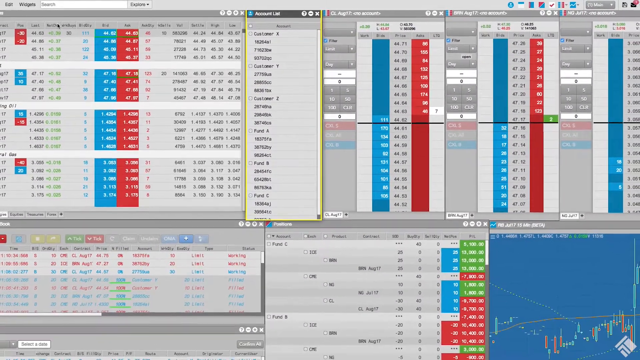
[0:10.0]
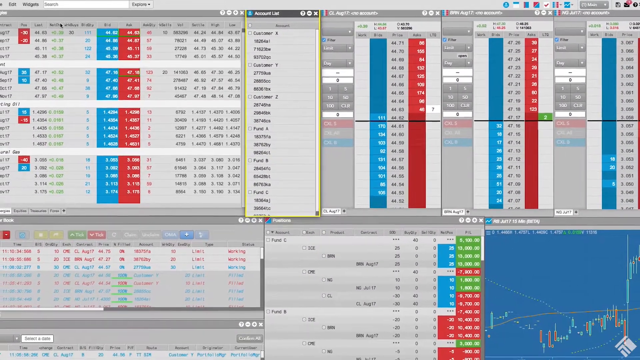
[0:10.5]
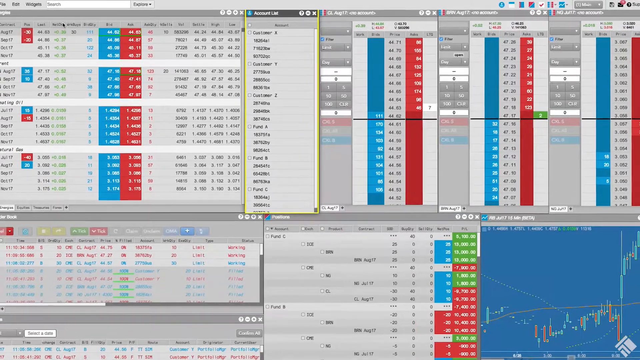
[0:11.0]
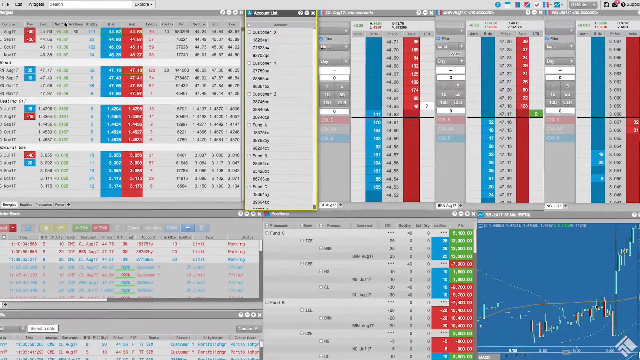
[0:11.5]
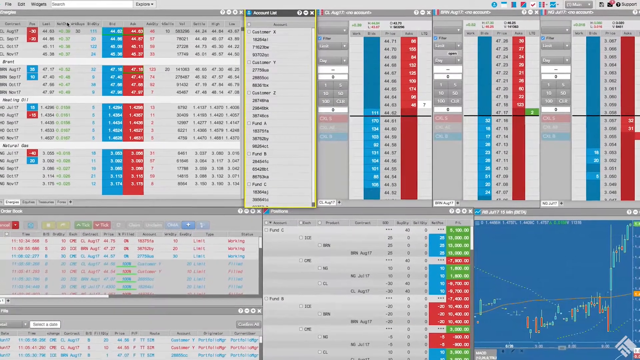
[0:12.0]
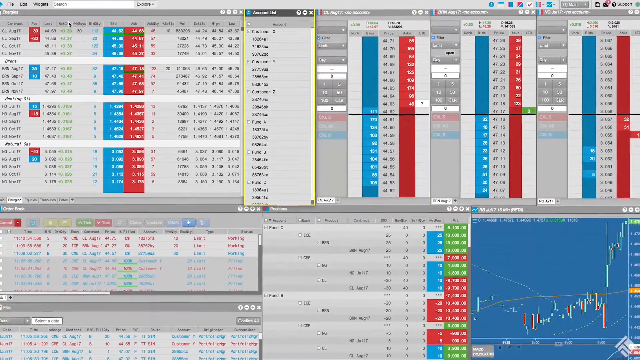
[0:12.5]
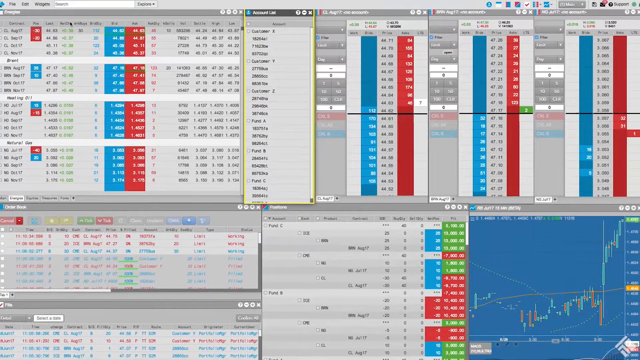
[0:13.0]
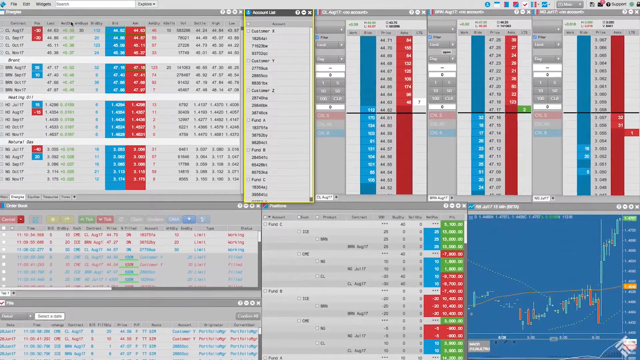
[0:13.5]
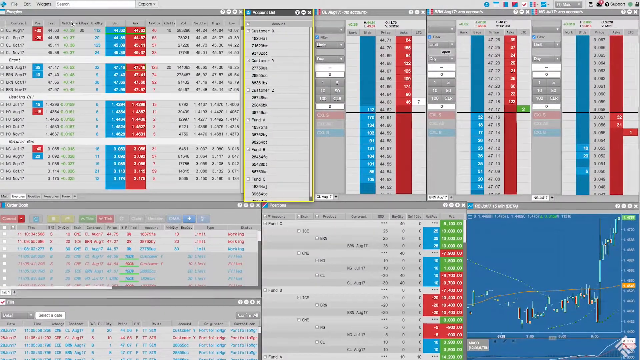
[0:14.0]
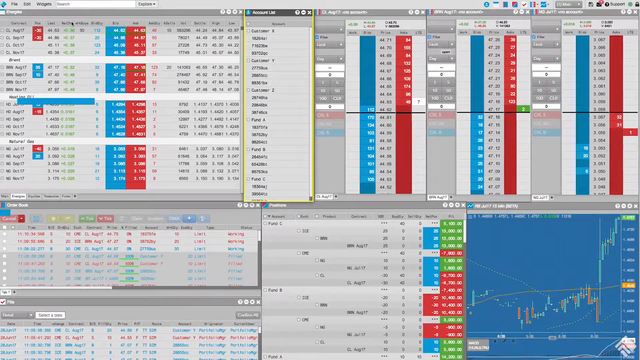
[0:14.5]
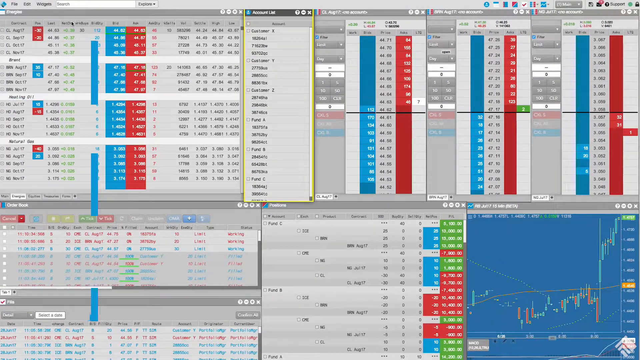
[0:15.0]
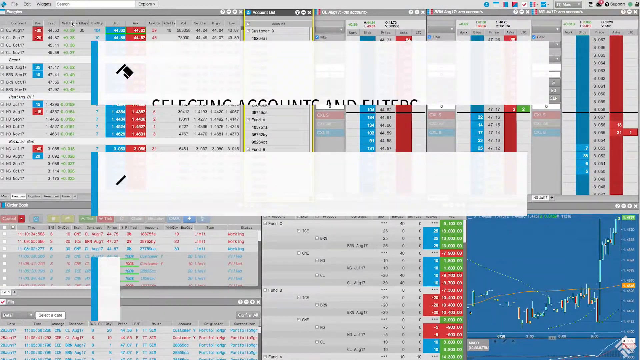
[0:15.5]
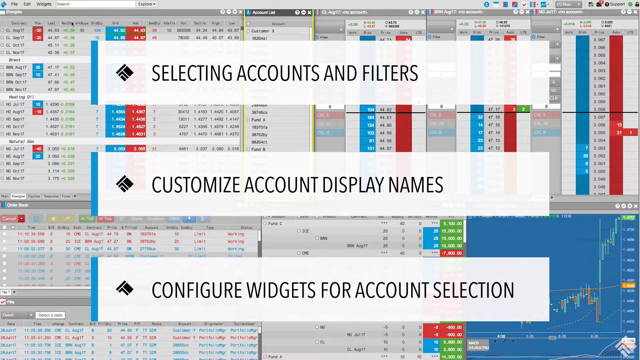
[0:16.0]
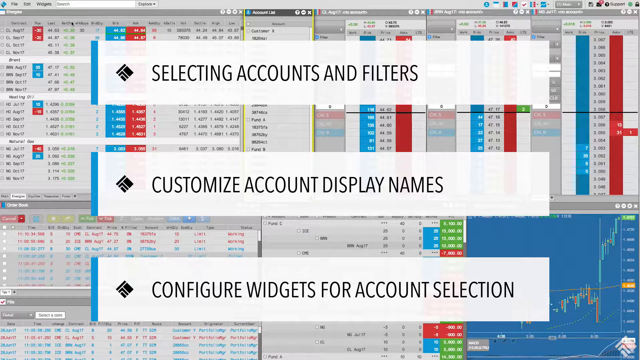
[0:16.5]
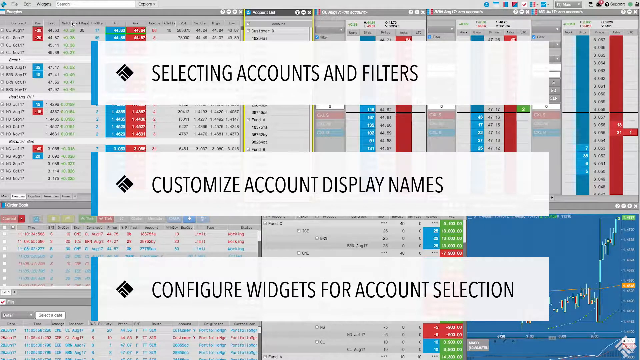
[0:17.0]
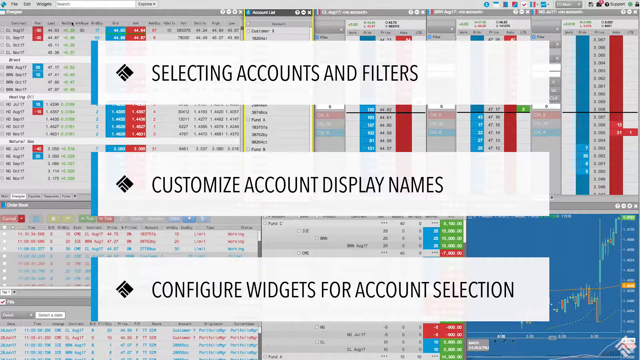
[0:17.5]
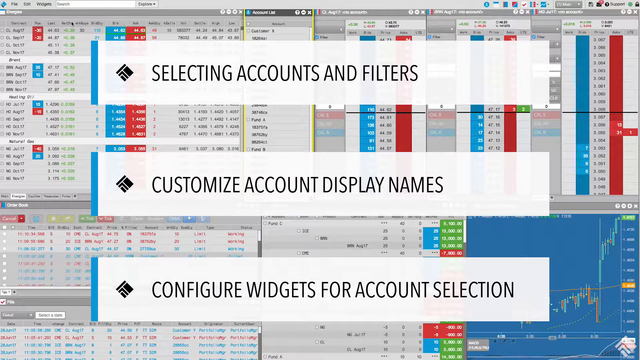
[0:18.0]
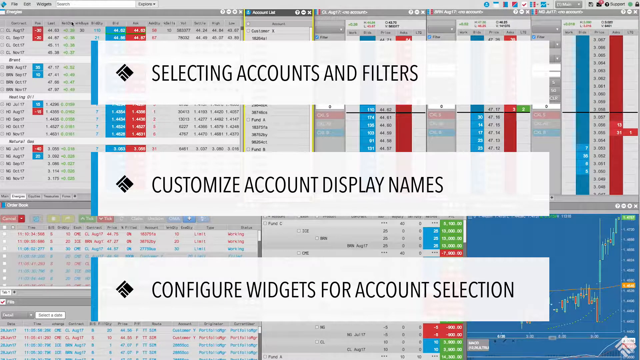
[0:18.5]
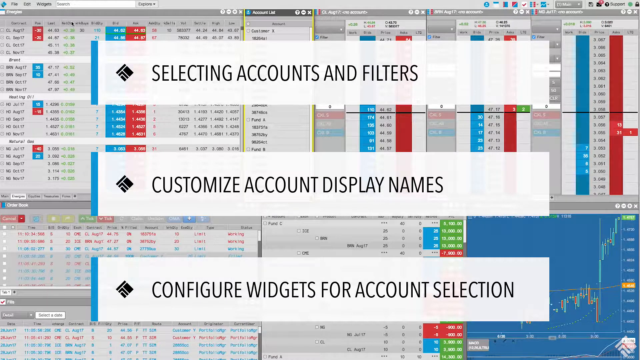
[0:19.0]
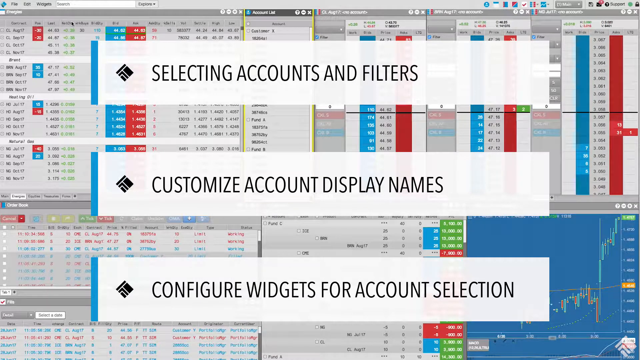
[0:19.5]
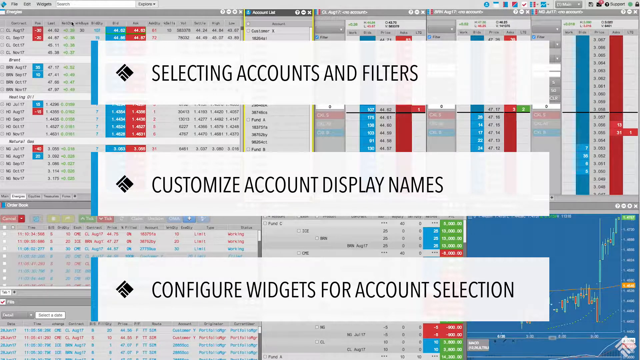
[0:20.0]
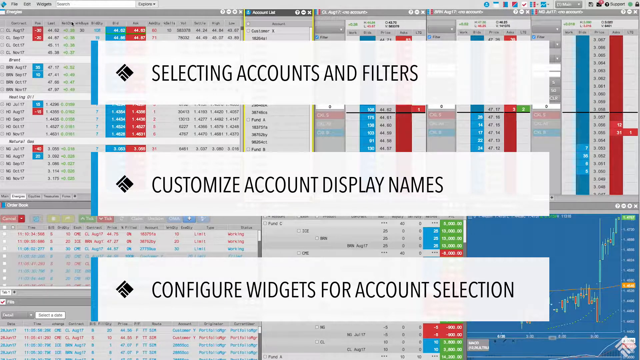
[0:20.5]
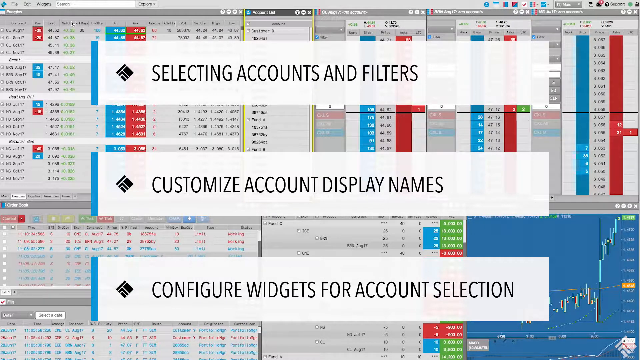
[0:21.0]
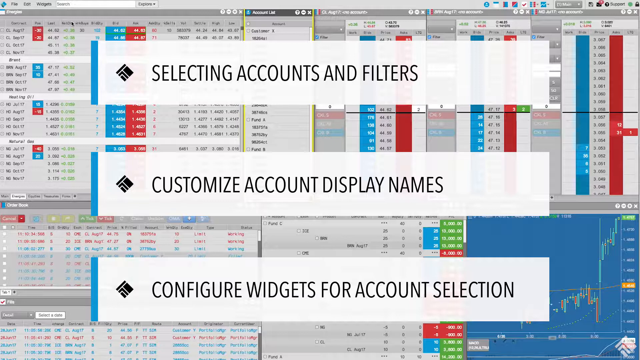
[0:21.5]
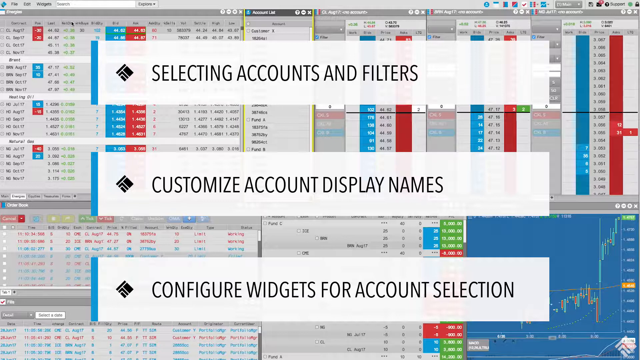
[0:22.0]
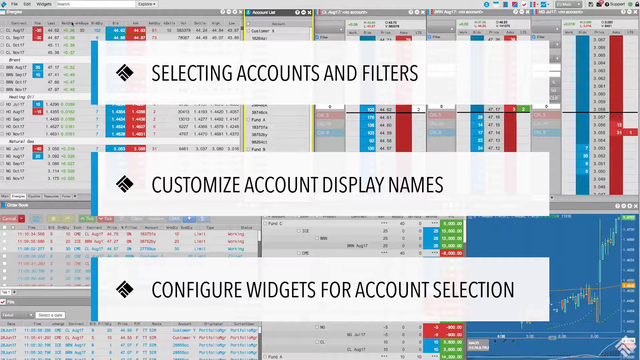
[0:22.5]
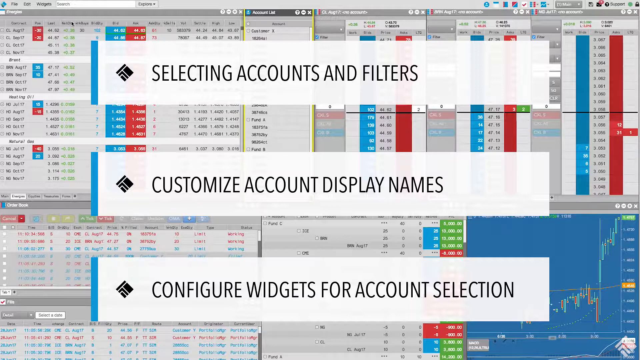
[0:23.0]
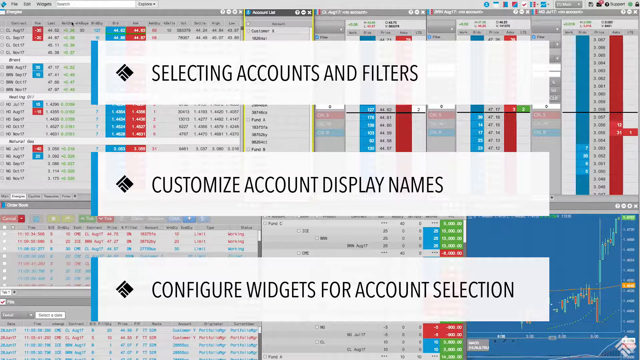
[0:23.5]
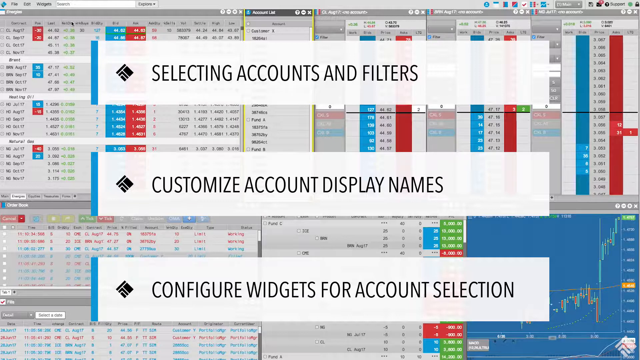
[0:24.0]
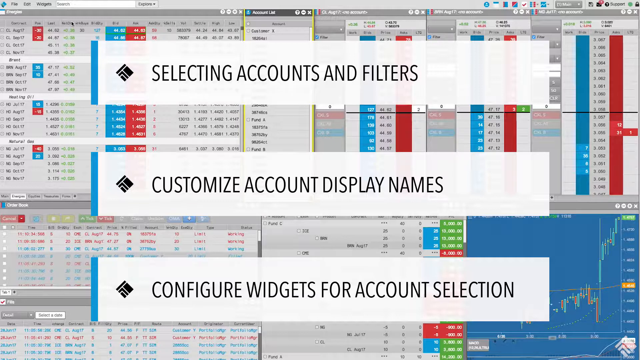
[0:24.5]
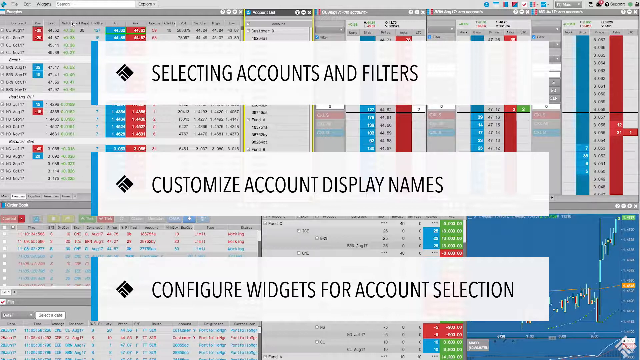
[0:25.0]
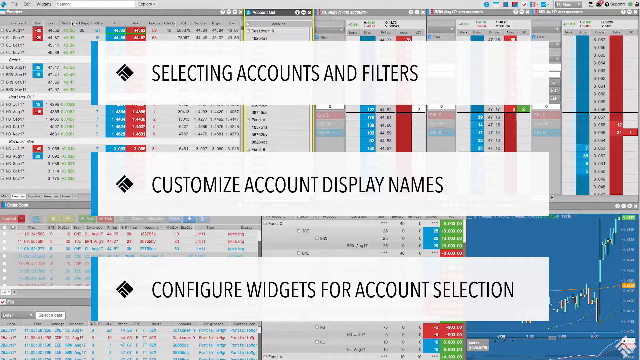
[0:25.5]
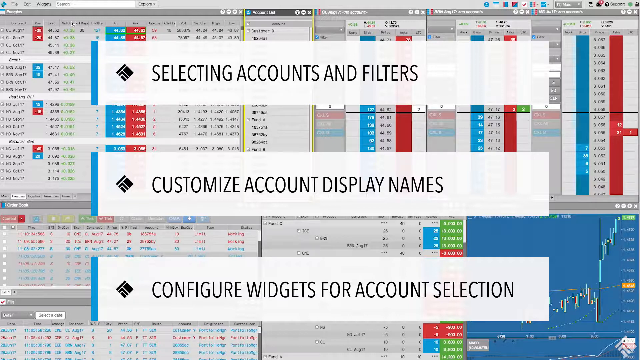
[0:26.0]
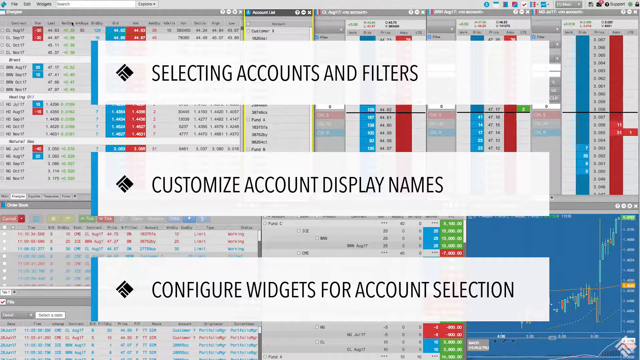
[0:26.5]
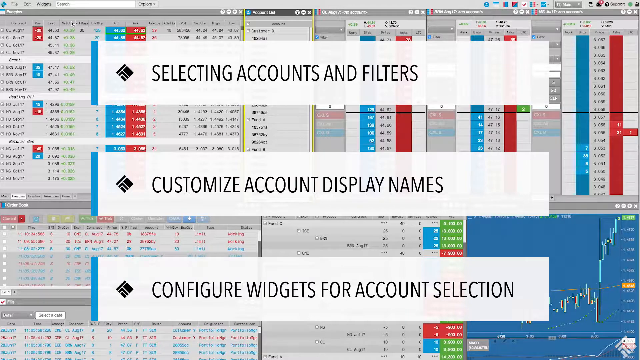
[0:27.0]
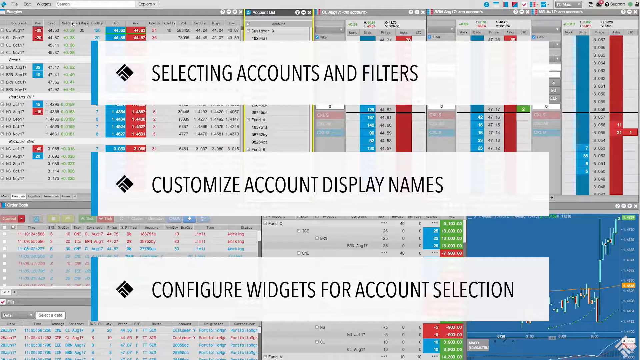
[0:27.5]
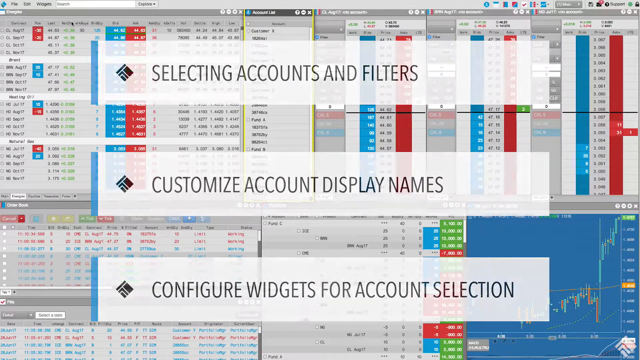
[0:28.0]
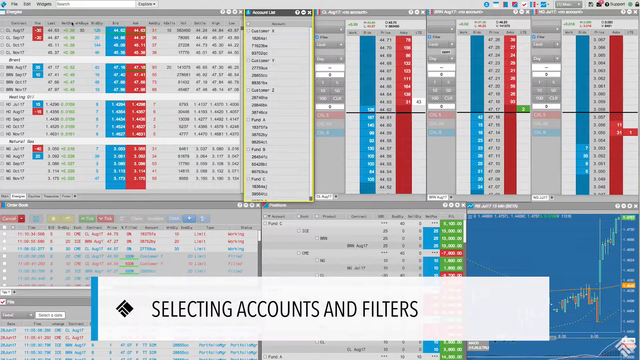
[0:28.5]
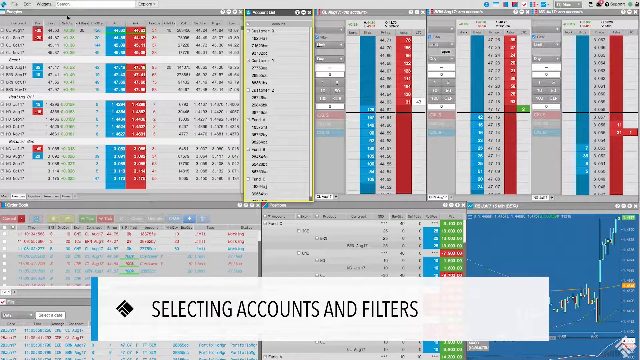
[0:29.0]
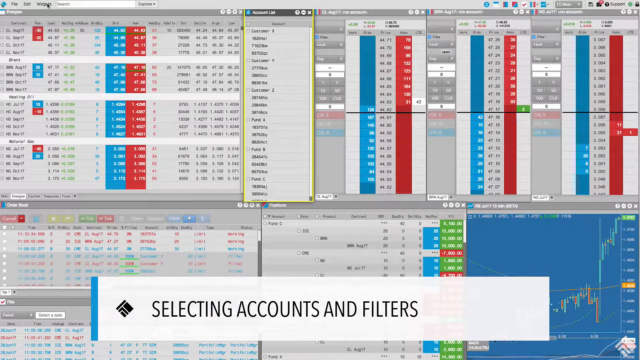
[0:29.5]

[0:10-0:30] Multiple windows or tabs are open on a computer, all showing rows and columns of numbers. Some of the windows overlap each other, and there appear to be about five windows open from the top to the bottom of the screen. Three banner-like bars then flash across the screen. The top one says "selecting accounts and filters," the middle one says "customize account display names," and the bottom one says "configure widgets for account selection." The bars have a blue margin on the left side and linger on the screen for about five to eight seconds. In the background, numbers flicker as they change, suggesting the open windows are stock market displays.